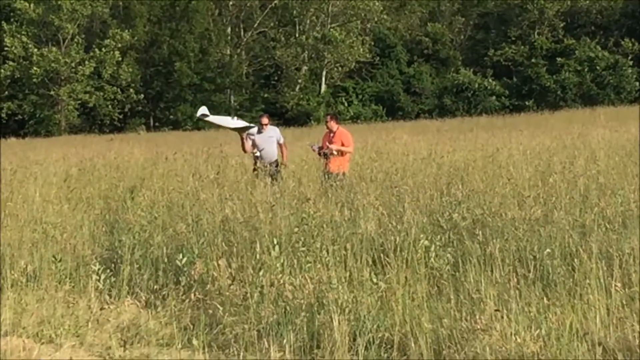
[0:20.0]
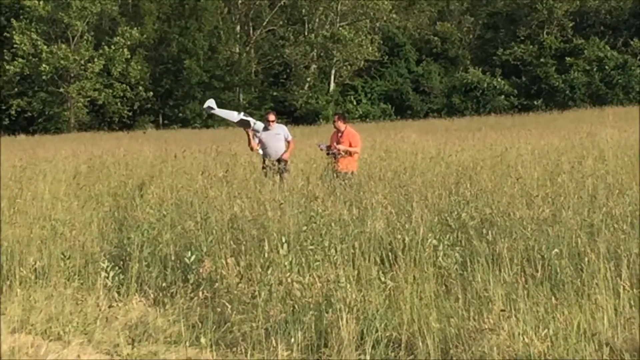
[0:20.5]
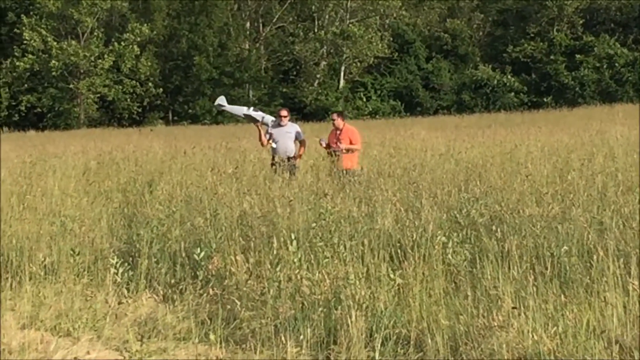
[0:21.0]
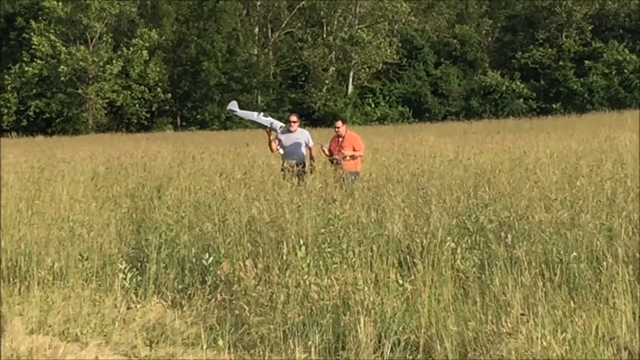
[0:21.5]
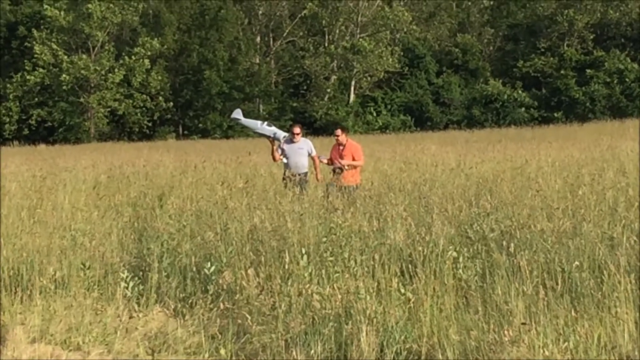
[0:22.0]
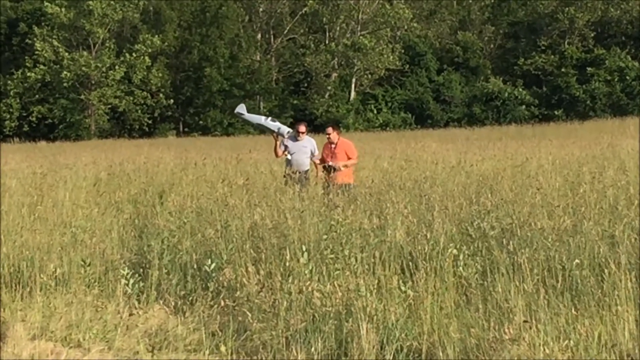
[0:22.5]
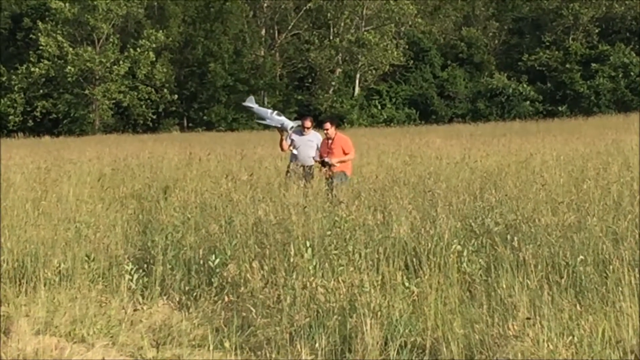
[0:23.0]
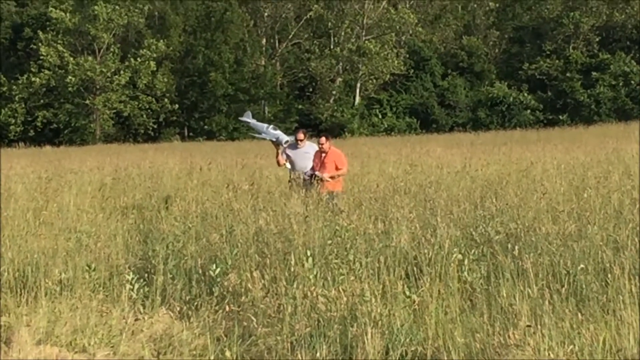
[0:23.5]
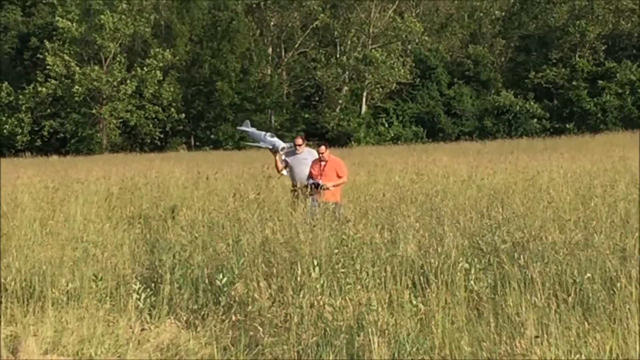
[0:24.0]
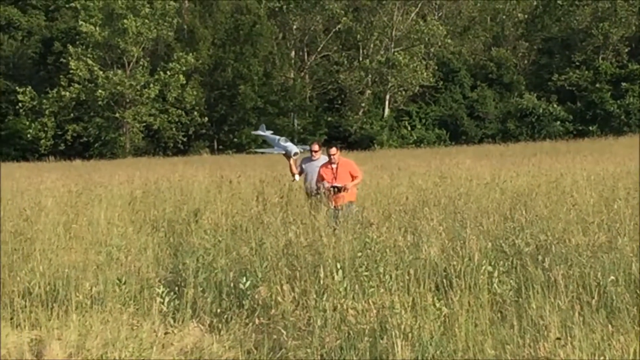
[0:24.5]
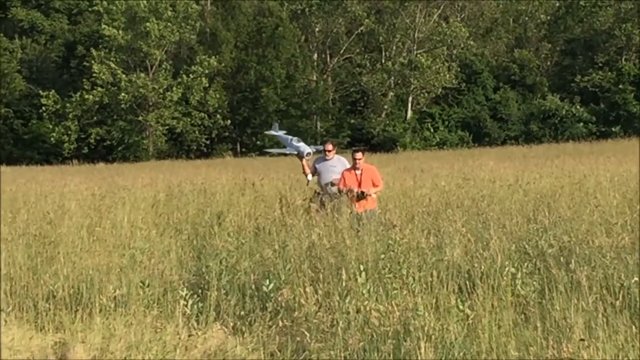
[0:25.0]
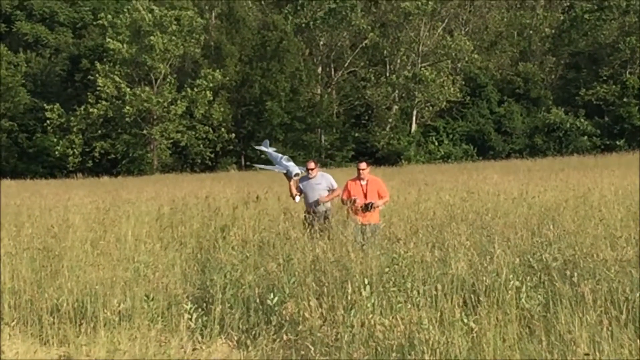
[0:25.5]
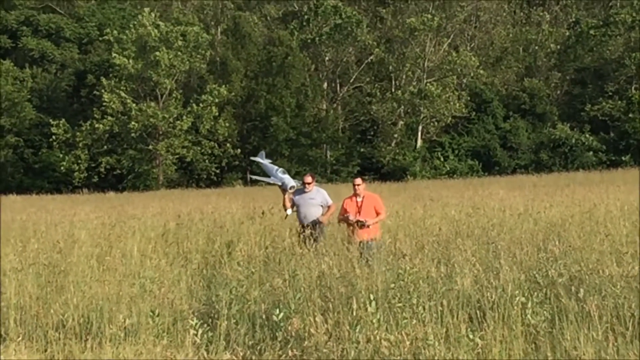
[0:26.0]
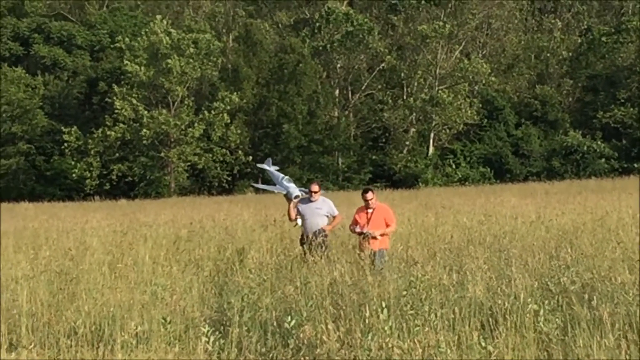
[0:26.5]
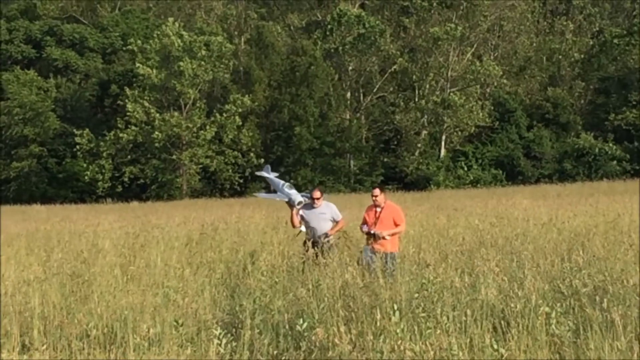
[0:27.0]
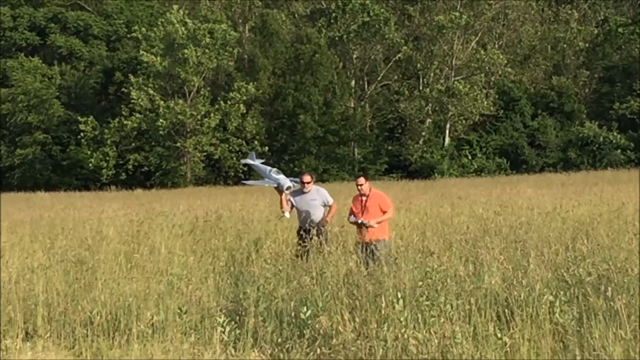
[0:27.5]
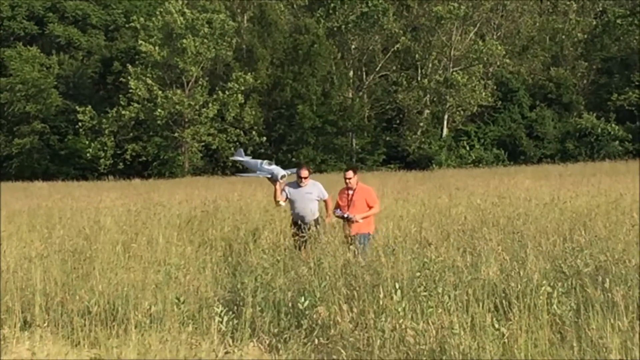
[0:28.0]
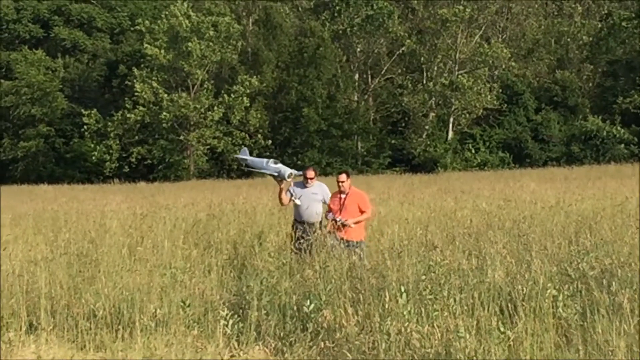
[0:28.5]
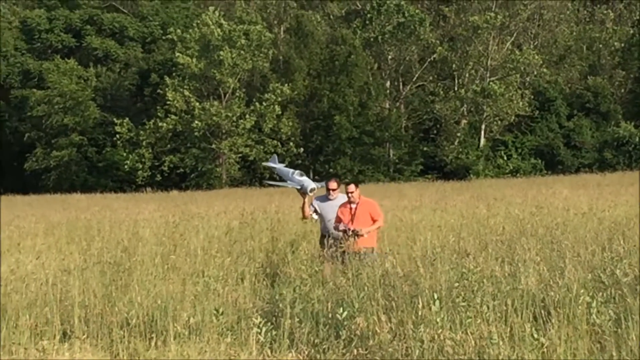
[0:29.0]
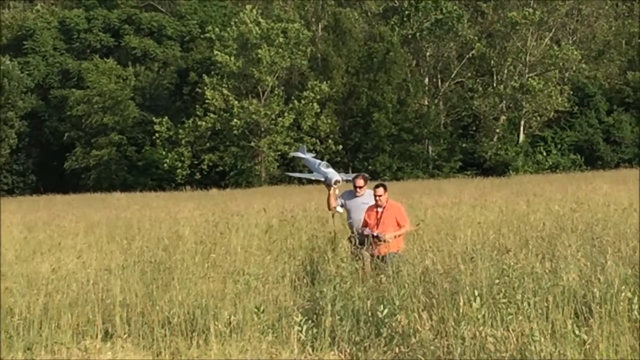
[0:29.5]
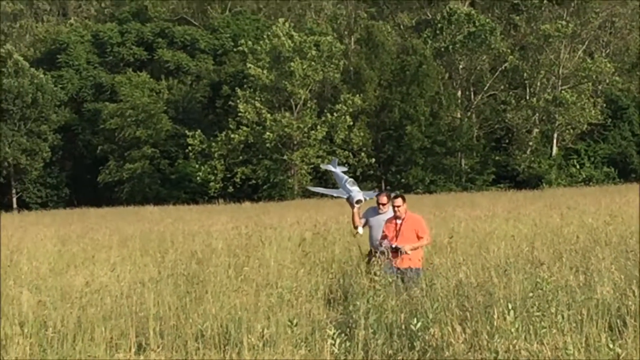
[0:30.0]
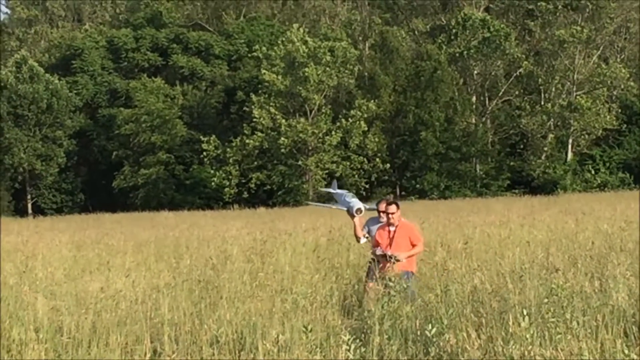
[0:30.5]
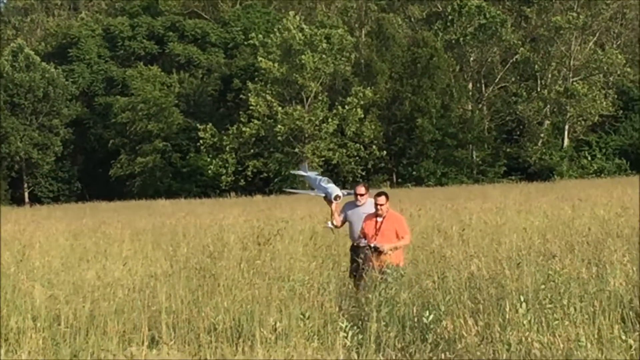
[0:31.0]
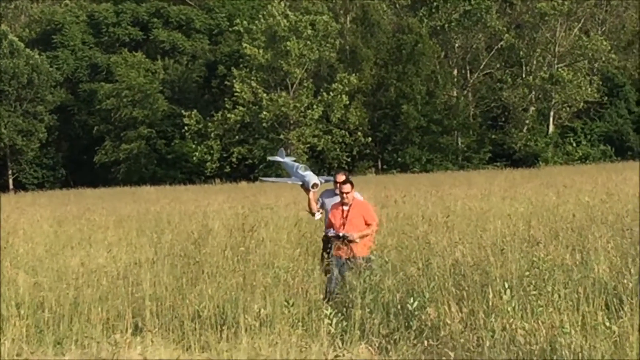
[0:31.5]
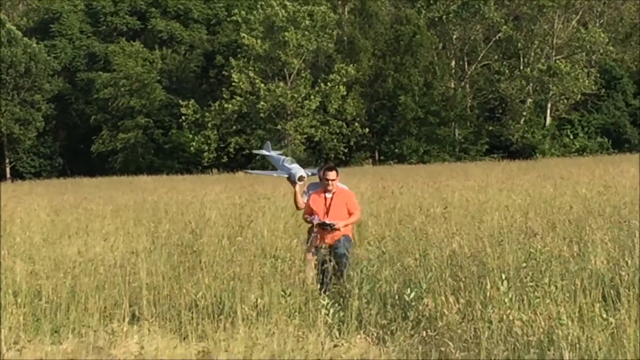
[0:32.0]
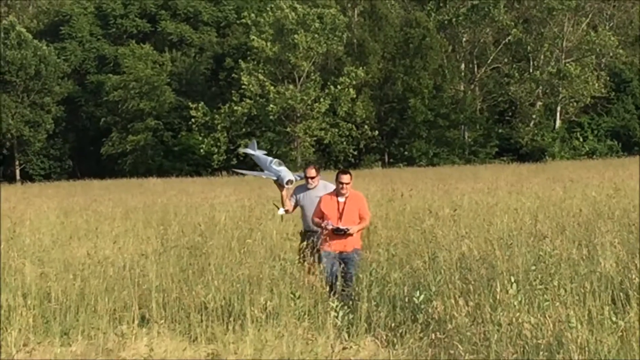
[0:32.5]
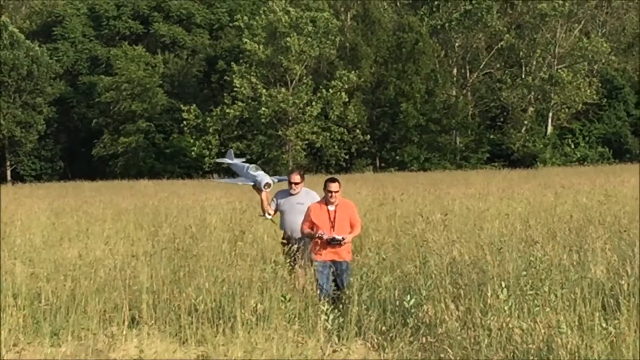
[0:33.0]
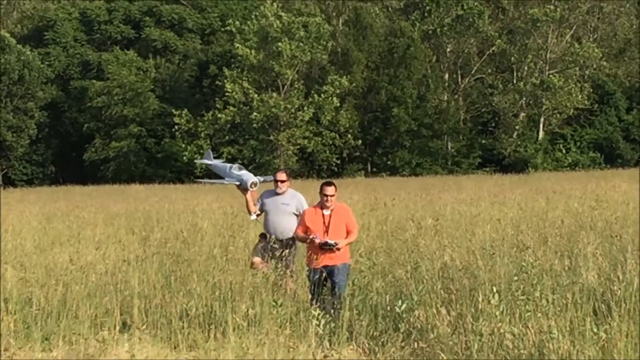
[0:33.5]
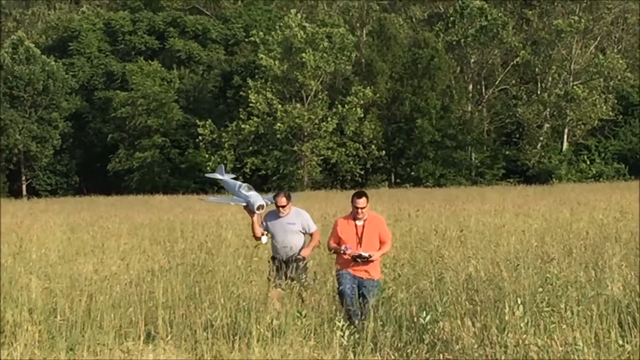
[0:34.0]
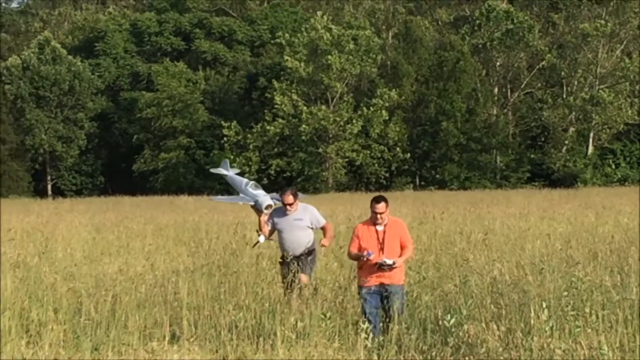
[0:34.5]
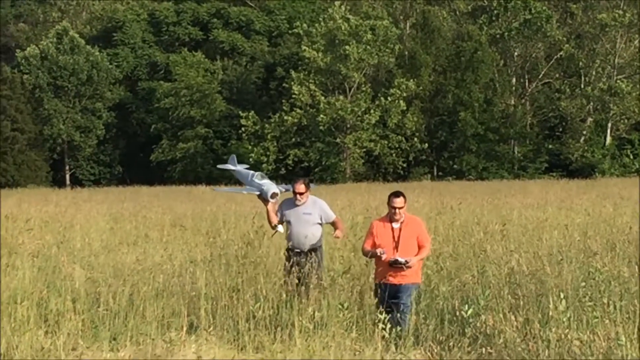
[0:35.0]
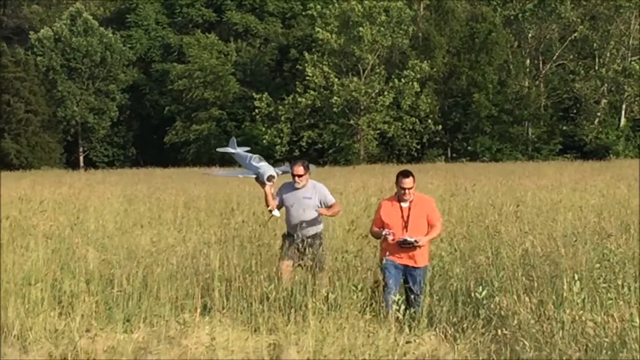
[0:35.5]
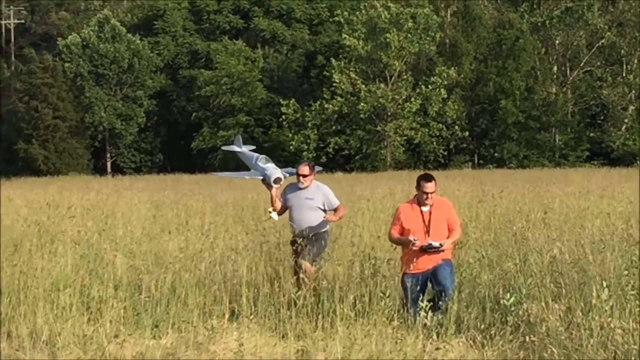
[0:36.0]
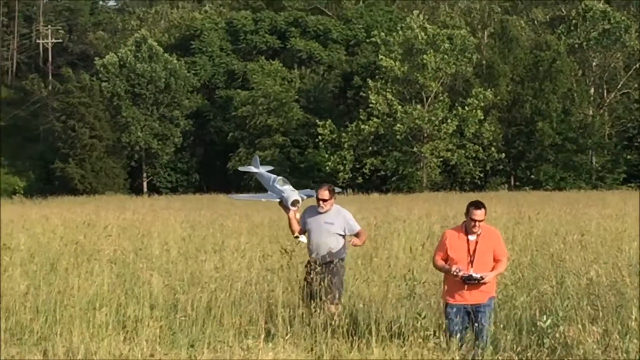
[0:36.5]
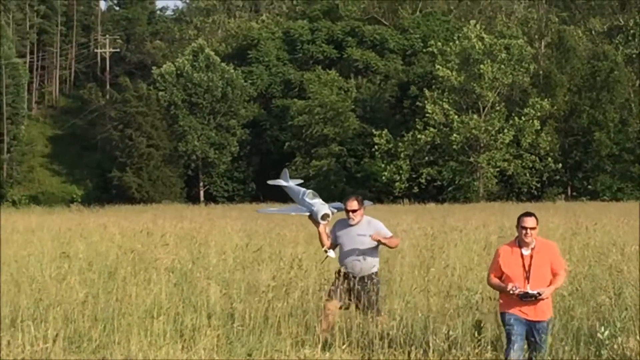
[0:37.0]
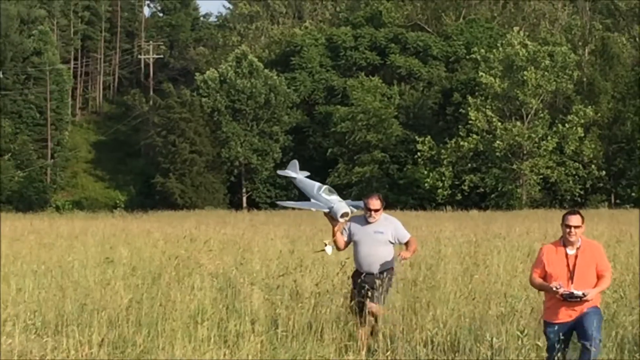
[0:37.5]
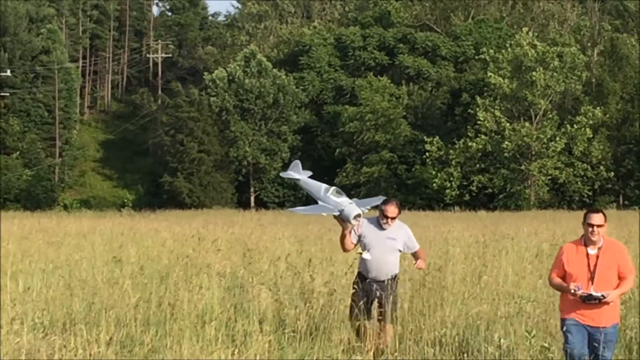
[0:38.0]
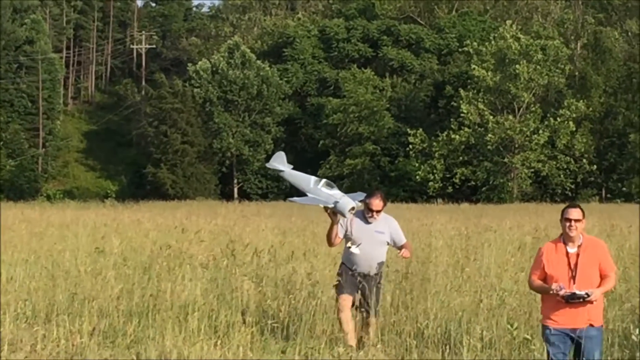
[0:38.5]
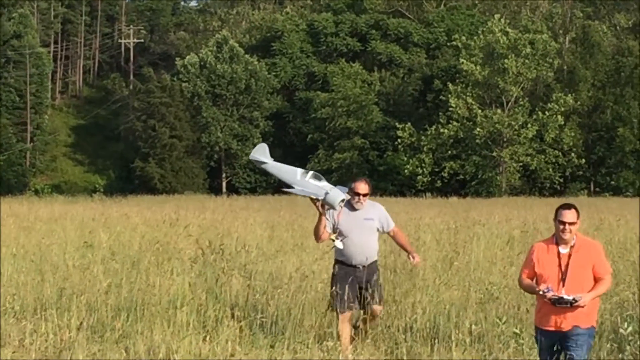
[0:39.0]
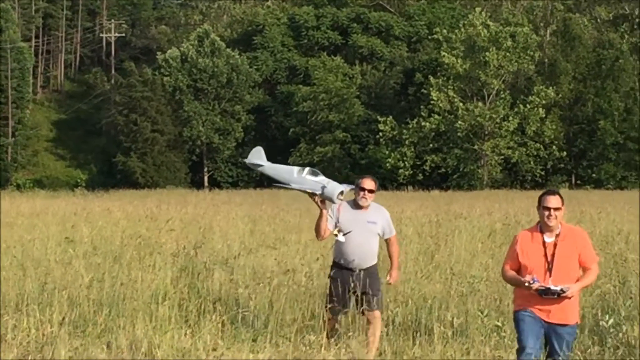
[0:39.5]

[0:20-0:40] Two people are visible. One is the man who threw the airplane into the air; he wears eyeglasses, a grey t-shirt and short pants. The second man wears a pink t-shirt and has something on his neck, maybe a controller for the airplane. They talk to each other in the big grass and go out of it with their airplane, which seems possibly destroyed. They walk through the grass, talking, and many big trees with green leaves are visible in the background.